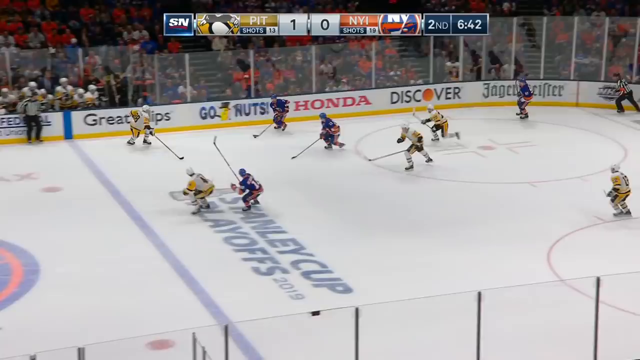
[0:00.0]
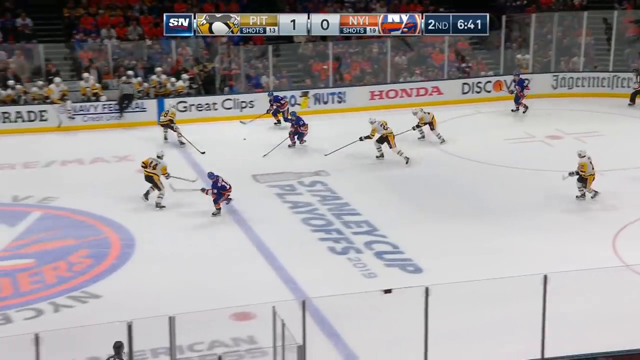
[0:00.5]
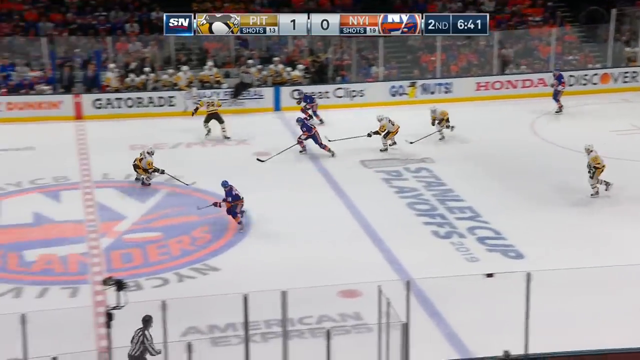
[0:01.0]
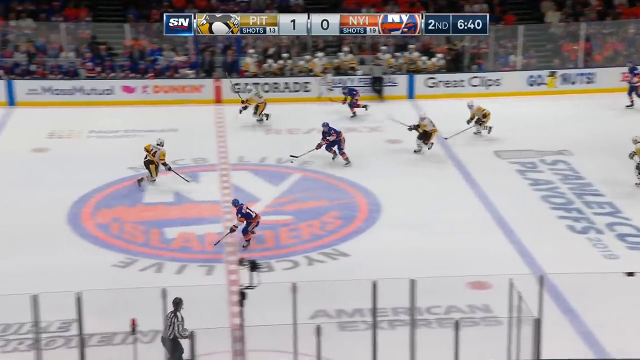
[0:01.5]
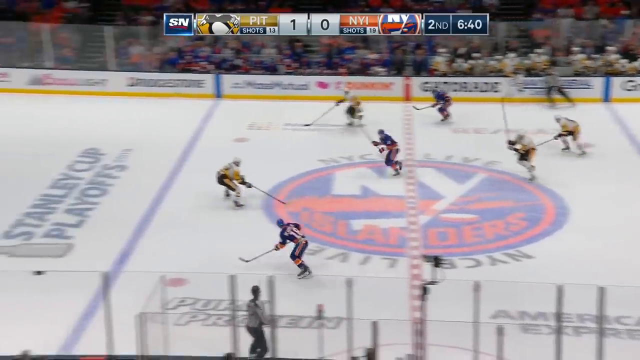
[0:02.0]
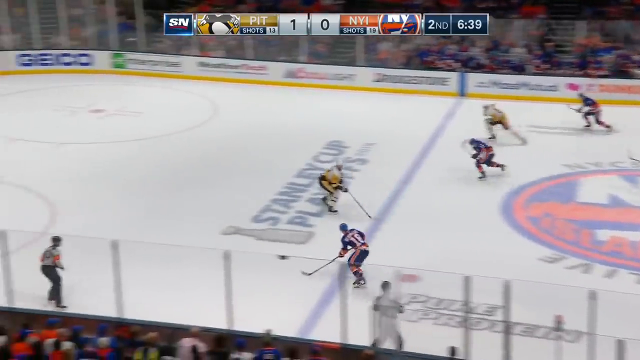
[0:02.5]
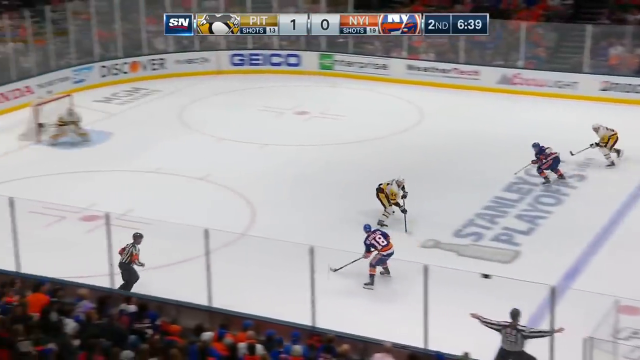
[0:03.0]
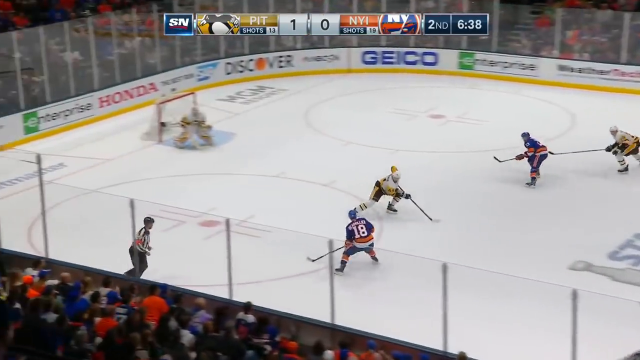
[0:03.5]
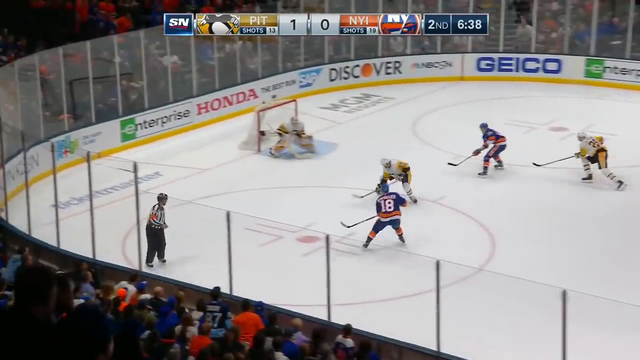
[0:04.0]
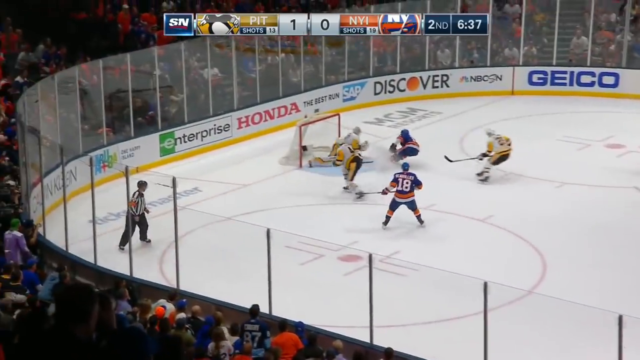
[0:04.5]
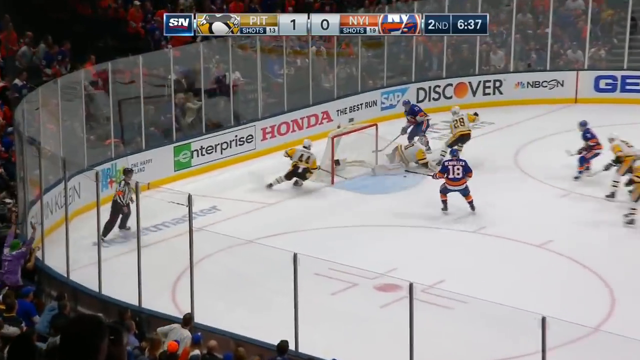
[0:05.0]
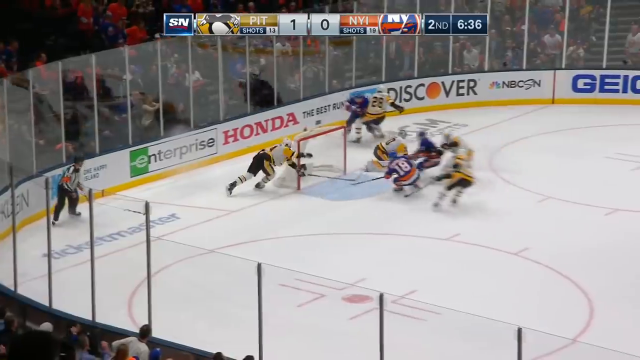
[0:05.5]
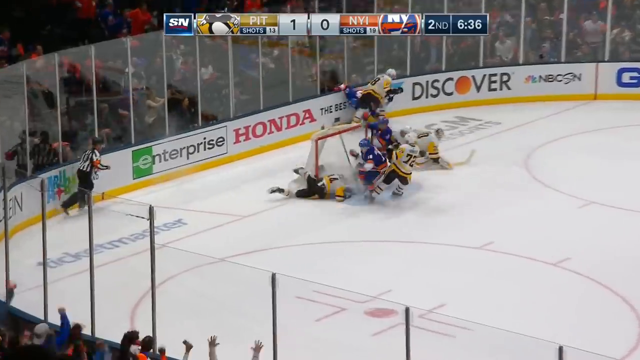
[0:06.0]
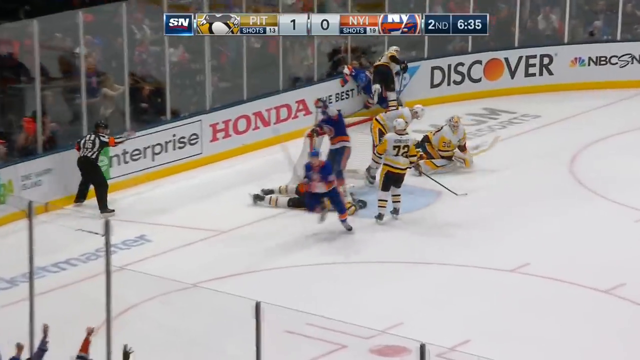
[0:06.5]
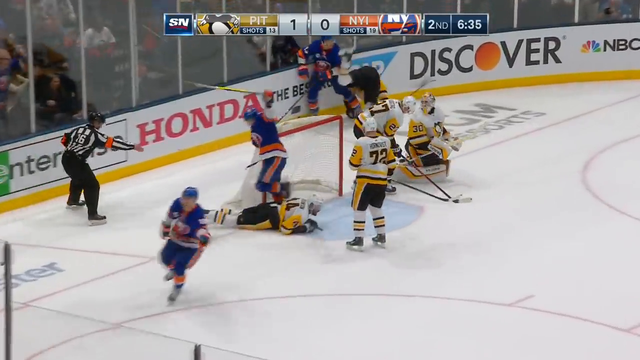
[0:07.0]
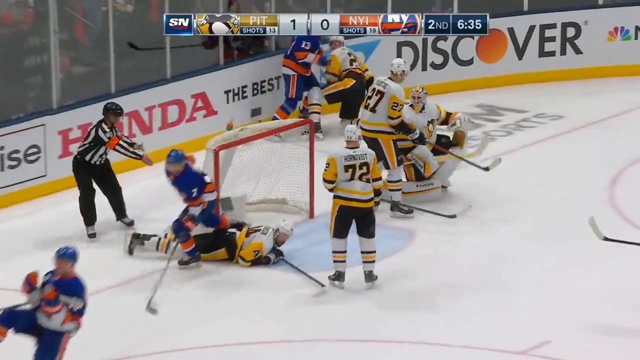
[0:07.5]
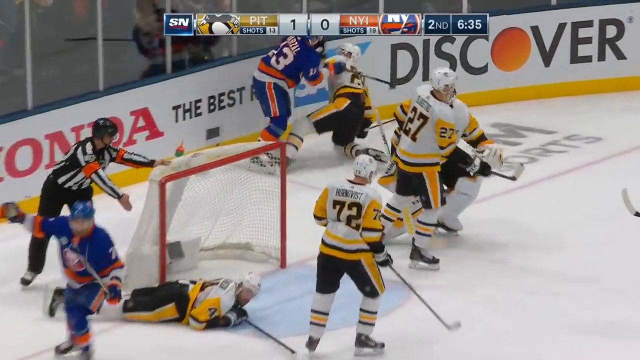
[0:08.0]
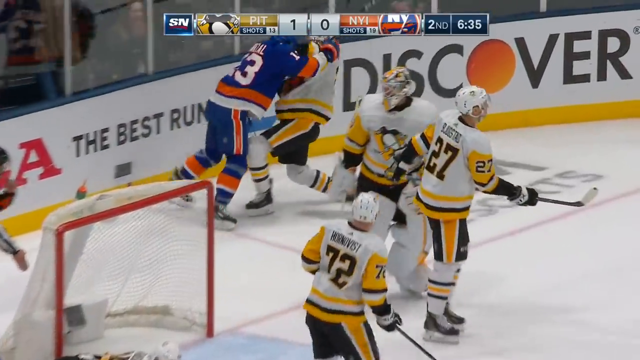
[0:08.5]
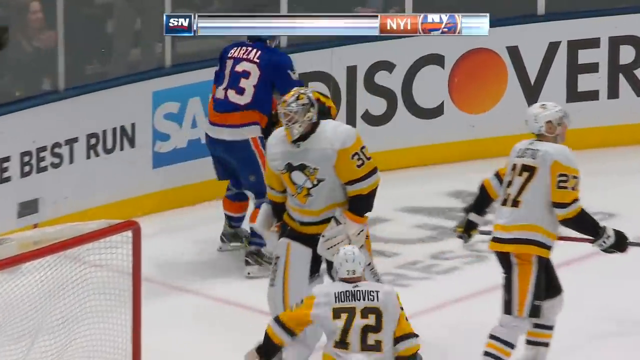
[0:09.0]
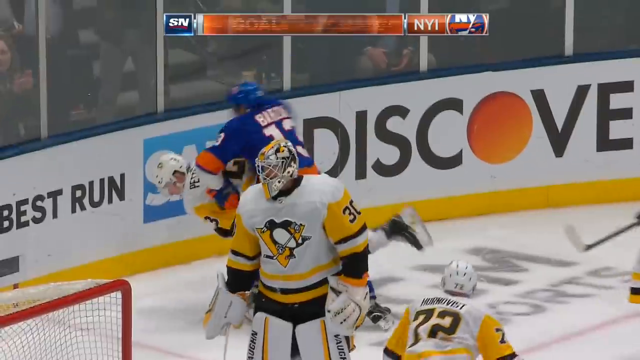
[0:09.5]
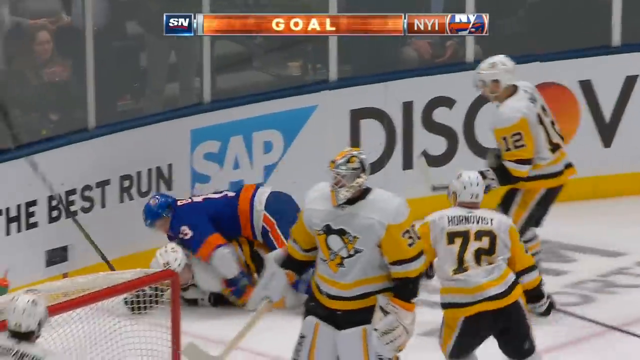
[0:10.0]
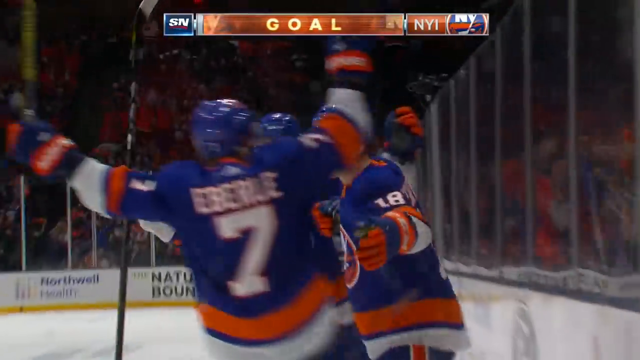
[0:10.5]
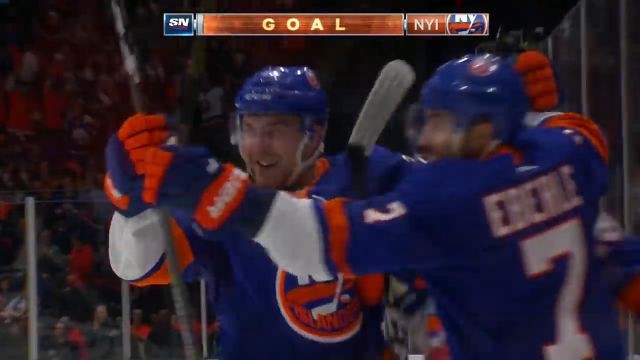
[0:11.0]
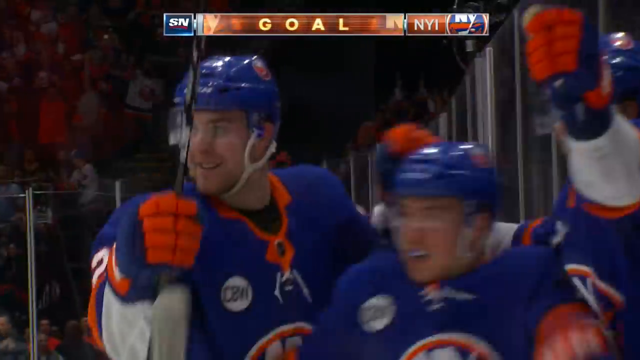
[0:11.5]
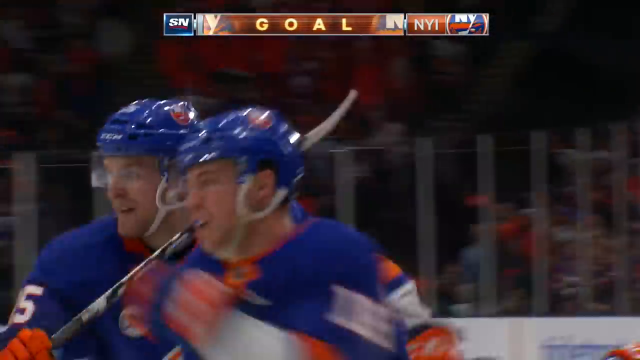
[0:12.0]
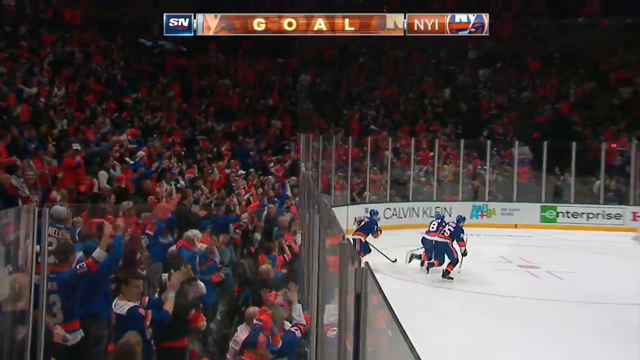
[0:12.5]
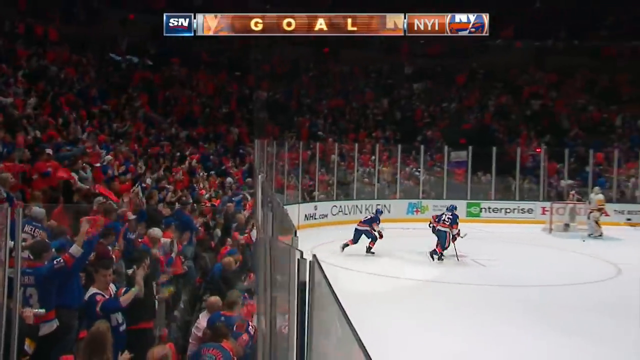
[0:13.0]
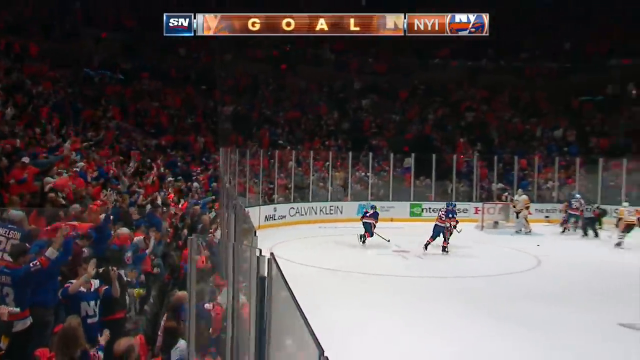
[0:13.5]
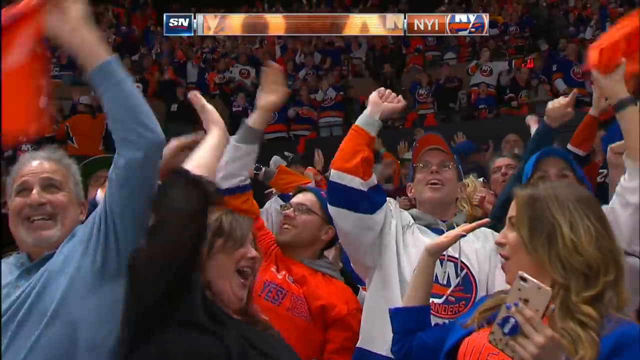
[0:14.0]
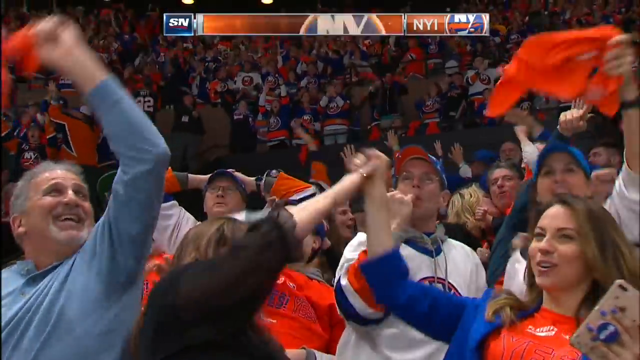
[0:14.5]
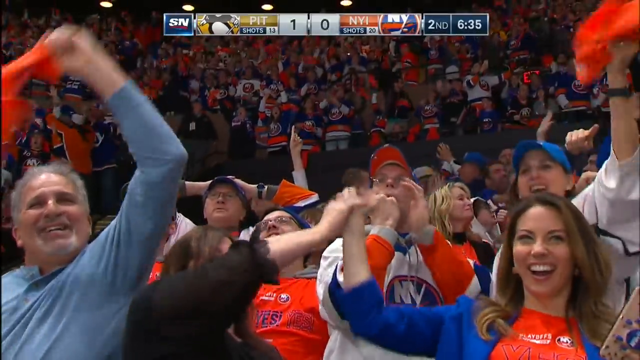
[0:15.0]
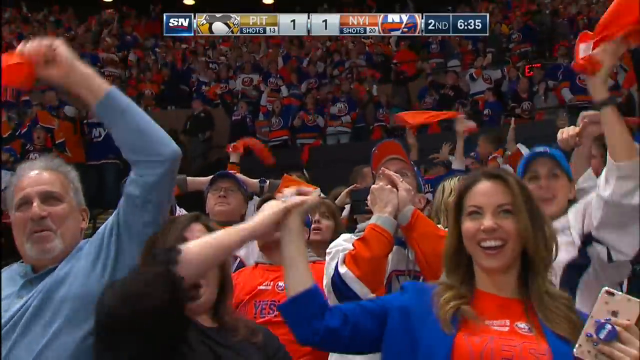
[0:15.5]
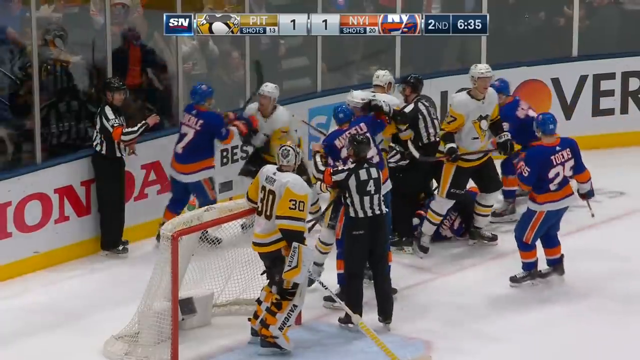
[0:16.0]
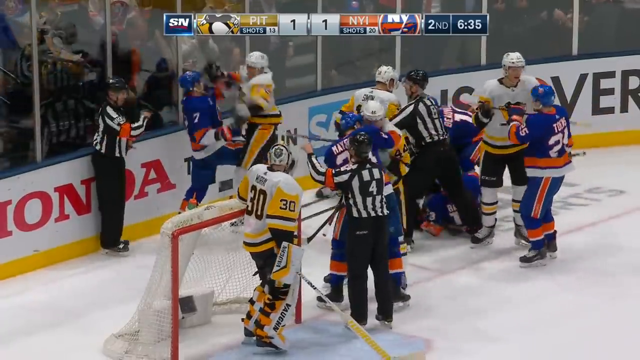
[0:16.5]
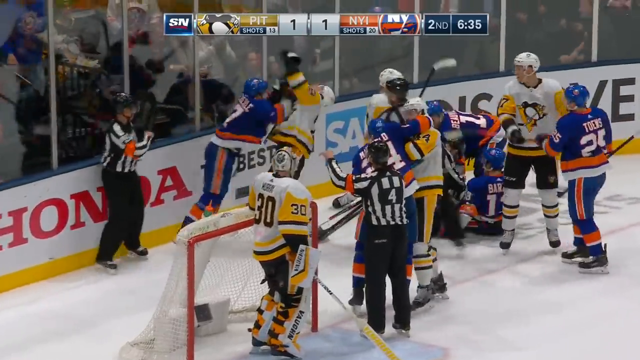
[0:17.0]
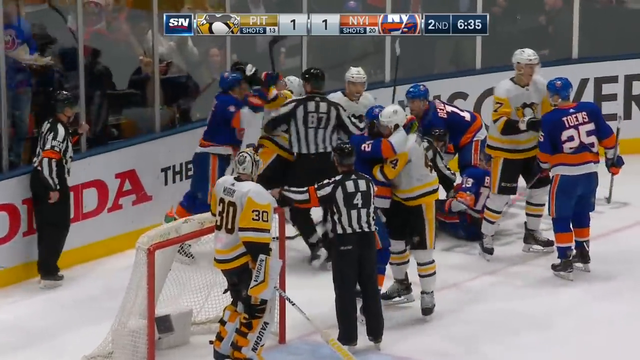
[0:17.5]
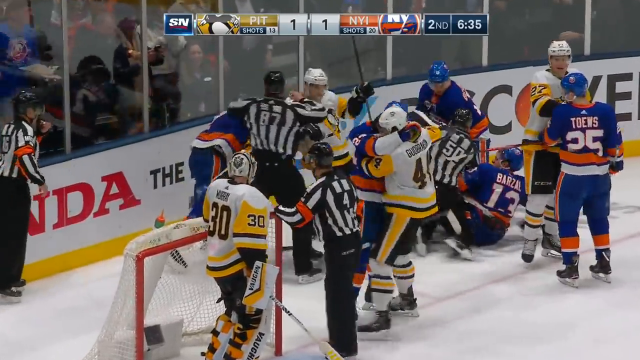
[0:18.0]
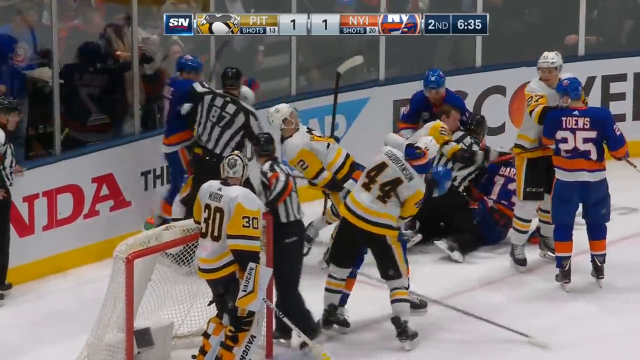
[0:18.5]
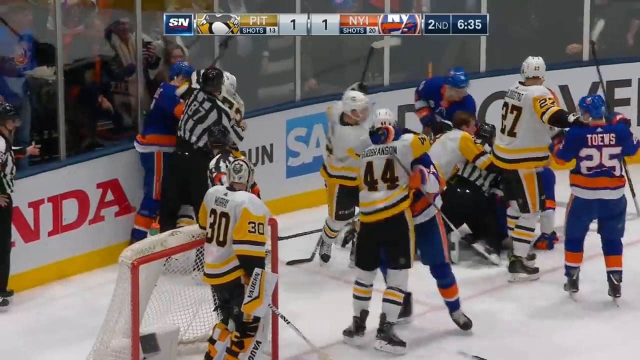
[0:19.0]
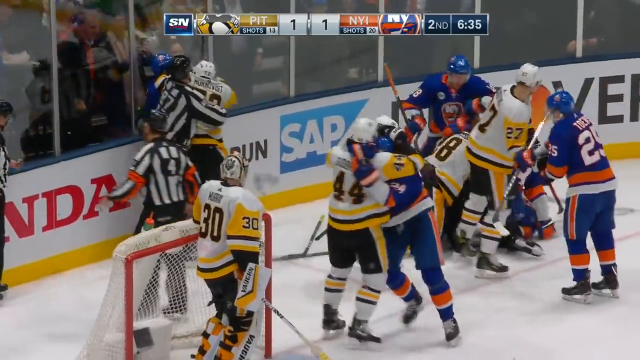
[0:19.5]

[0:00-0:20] A hockey game that appears to be from the NHL is underway, with the New York Islanders and the Pittsburgh Penguins named at the very top of the screen in a bar that shows the scores, shots, time and period. The game appears to be played in New York, as an Islanders logo is at center ice. One of the teams, apparently the Islanders, drives on the Penguins on a fast break; someone out in front with the puck shoots and scores a goal. The crowd goes crazy, and so do the Islanders players. Right after that, things get very physical: players begin shoving into each other and fighting, with multiple fights going on at one time.